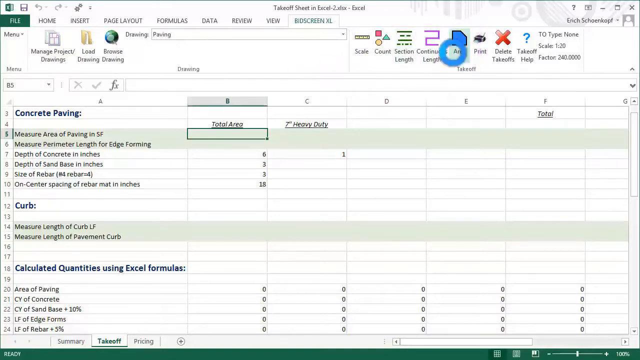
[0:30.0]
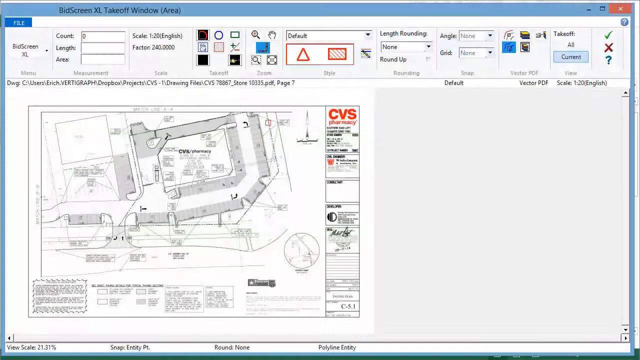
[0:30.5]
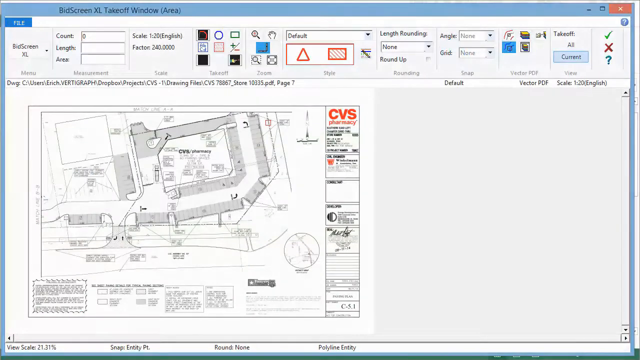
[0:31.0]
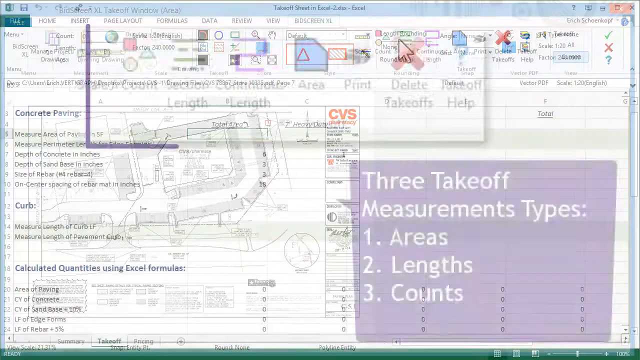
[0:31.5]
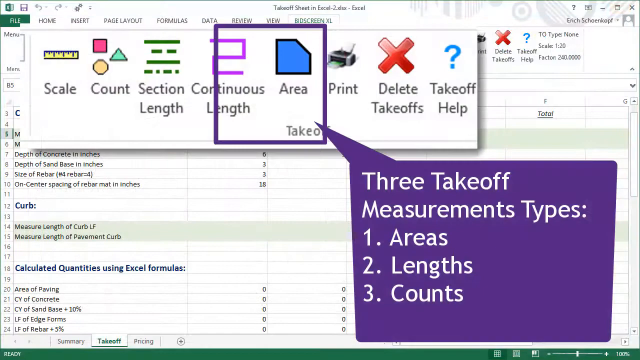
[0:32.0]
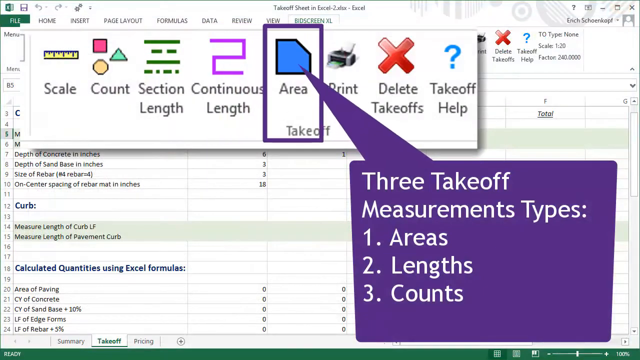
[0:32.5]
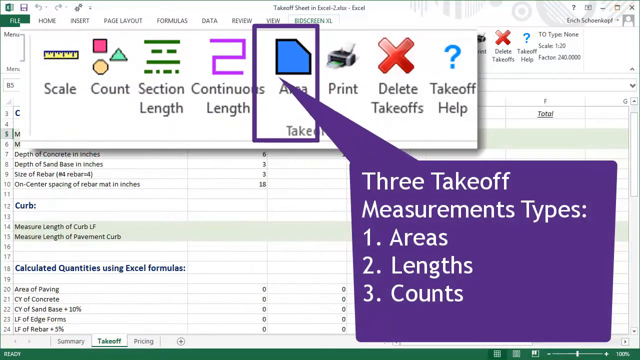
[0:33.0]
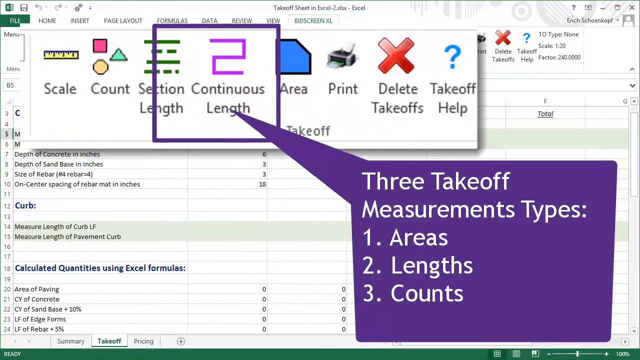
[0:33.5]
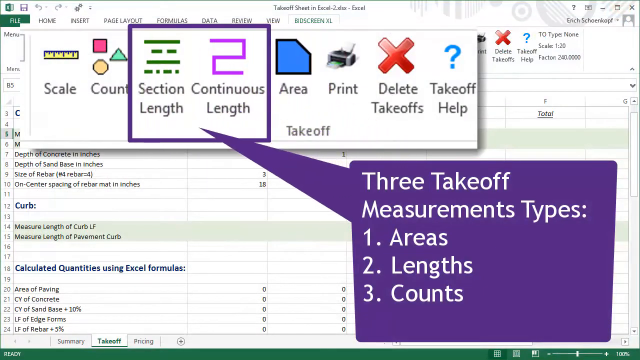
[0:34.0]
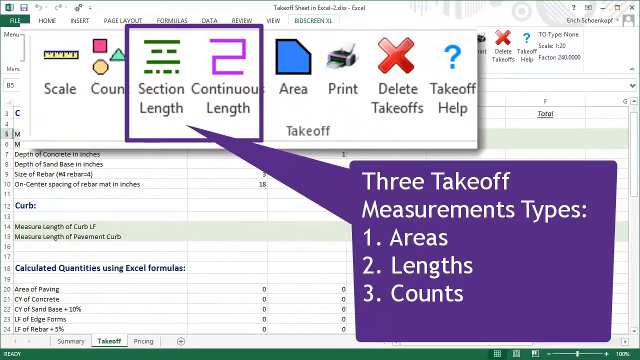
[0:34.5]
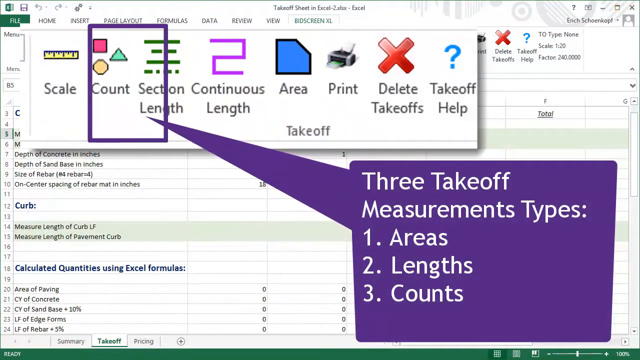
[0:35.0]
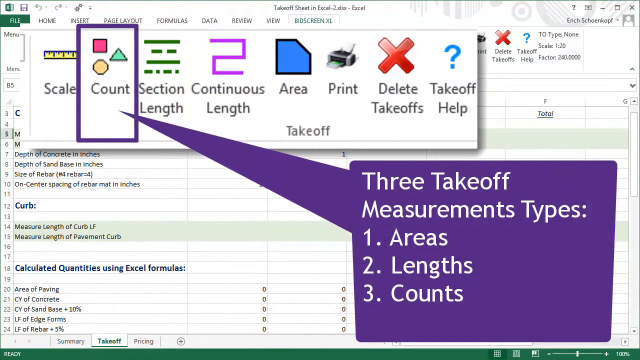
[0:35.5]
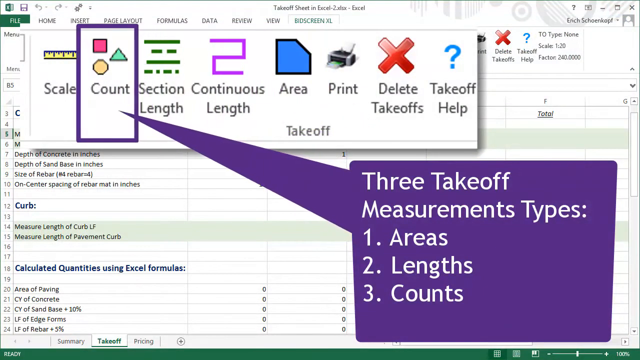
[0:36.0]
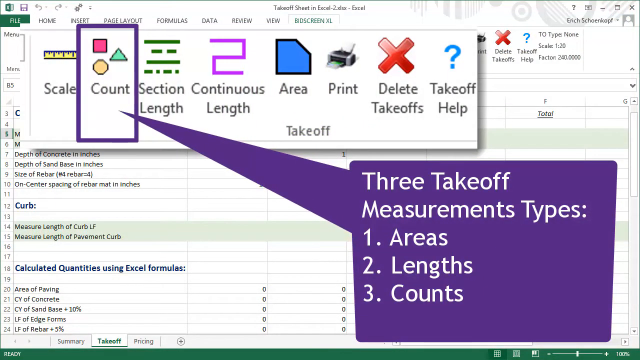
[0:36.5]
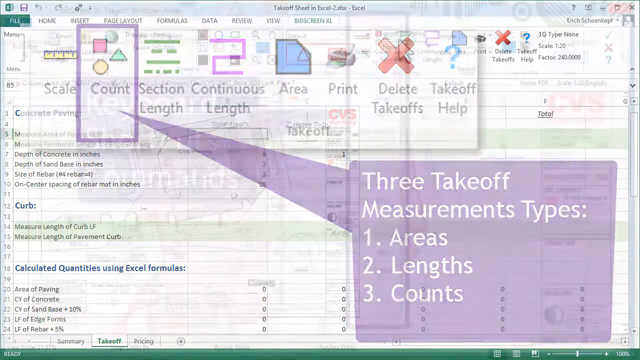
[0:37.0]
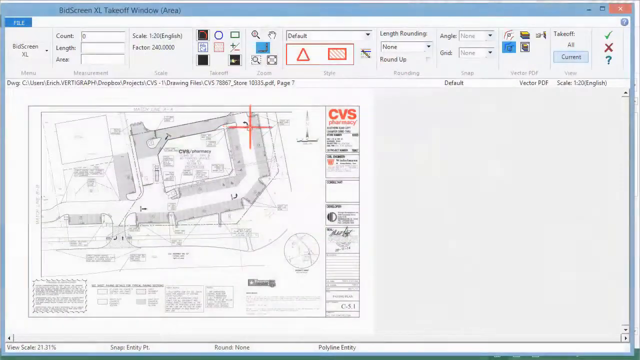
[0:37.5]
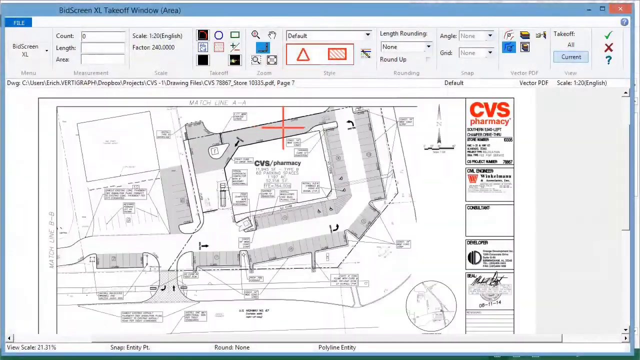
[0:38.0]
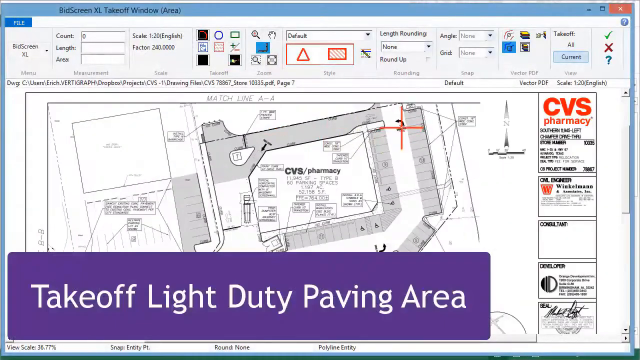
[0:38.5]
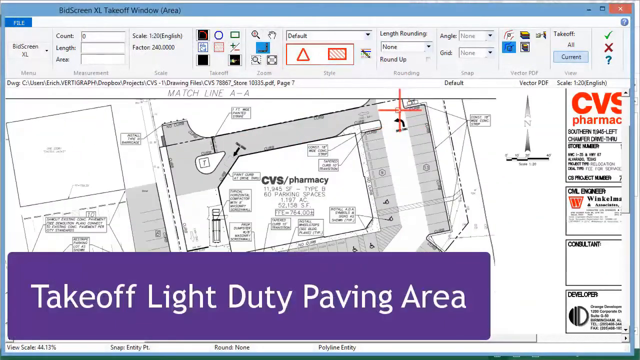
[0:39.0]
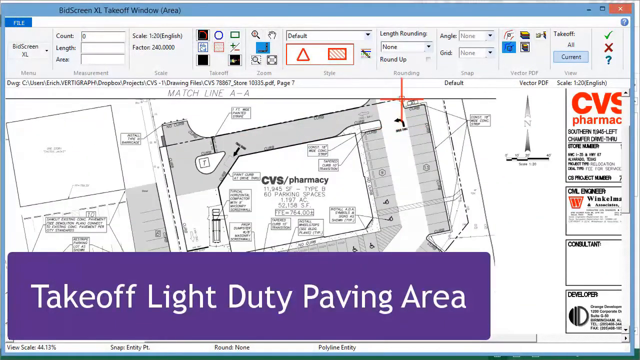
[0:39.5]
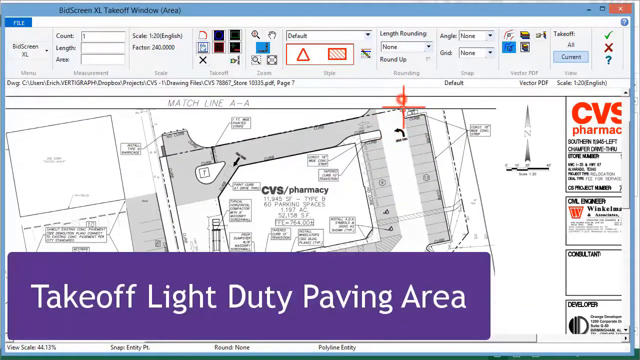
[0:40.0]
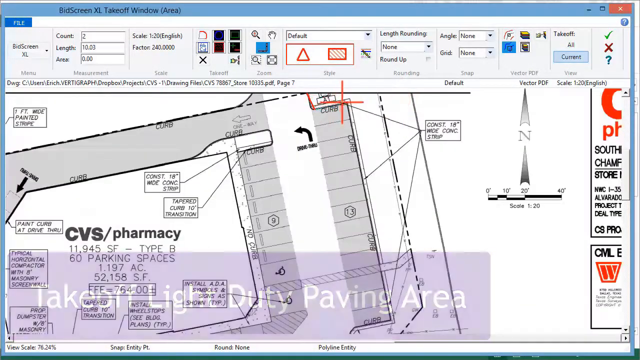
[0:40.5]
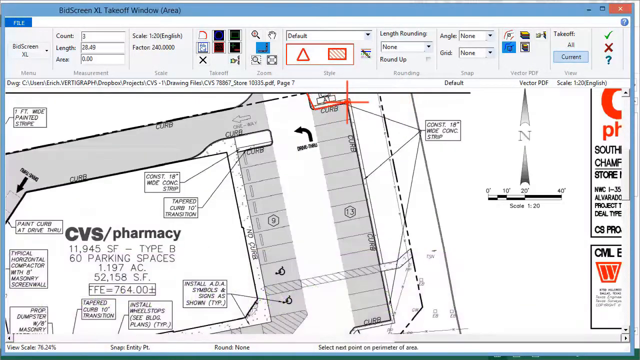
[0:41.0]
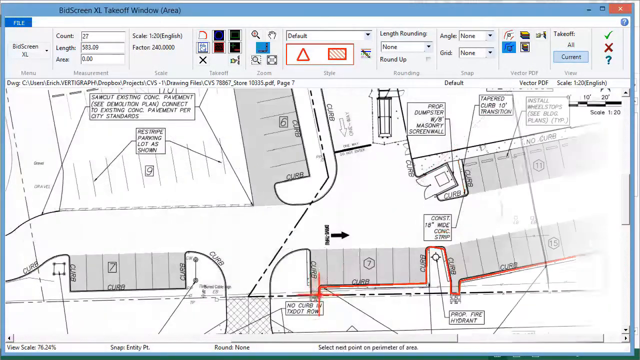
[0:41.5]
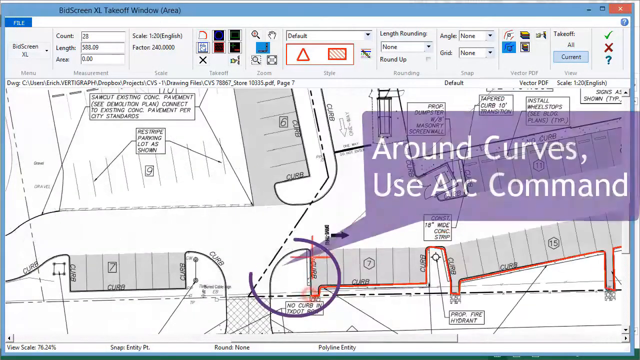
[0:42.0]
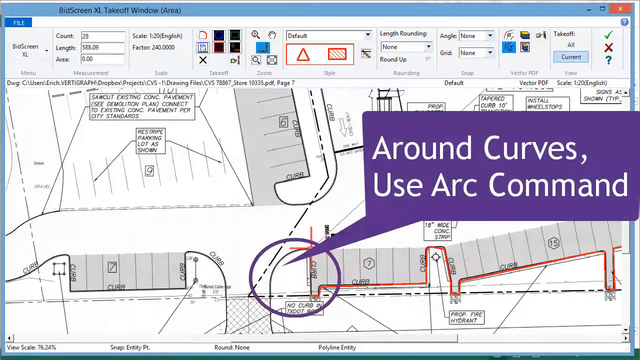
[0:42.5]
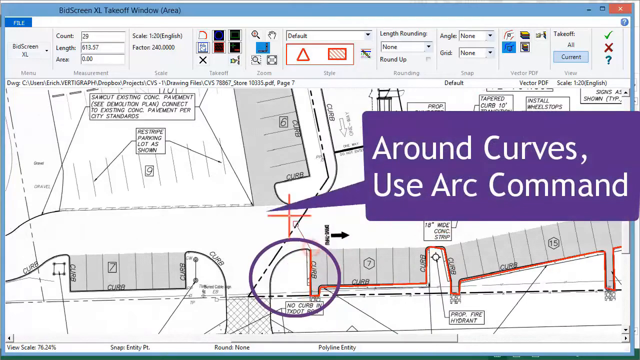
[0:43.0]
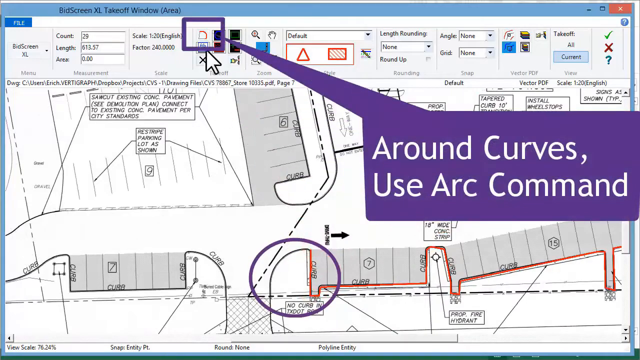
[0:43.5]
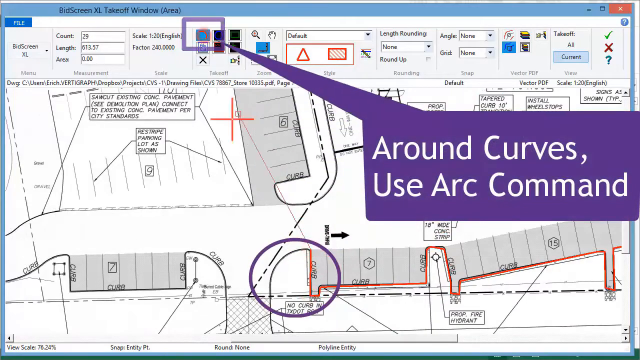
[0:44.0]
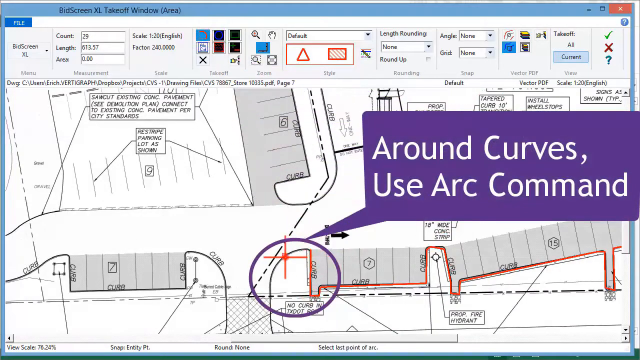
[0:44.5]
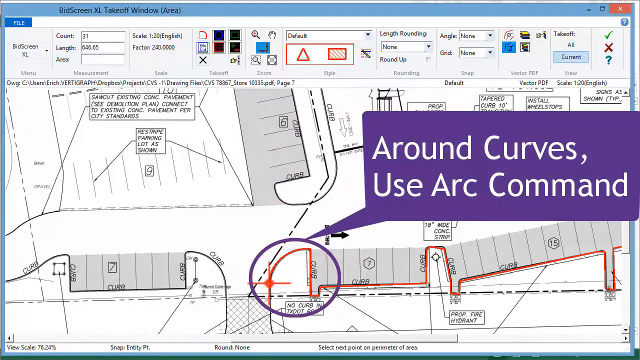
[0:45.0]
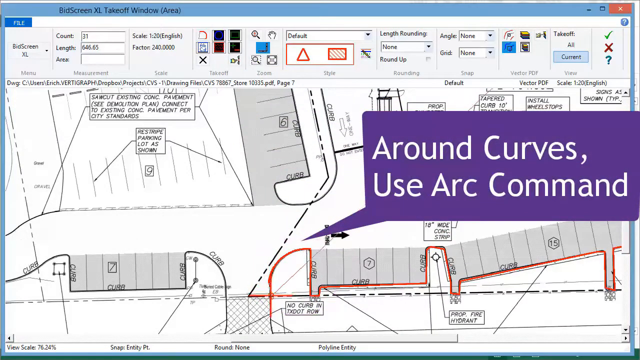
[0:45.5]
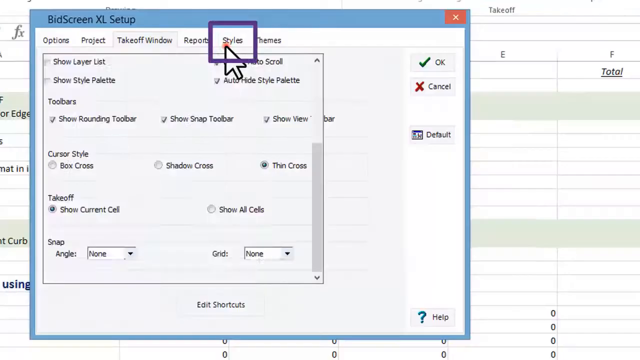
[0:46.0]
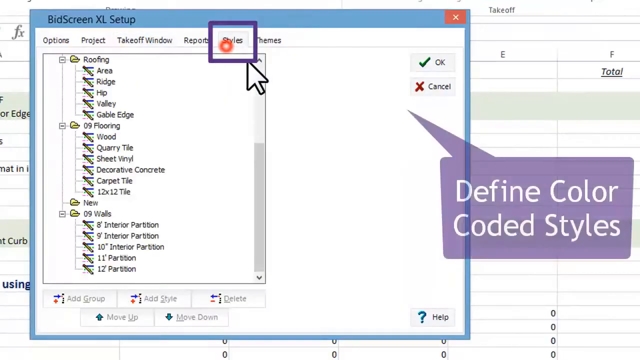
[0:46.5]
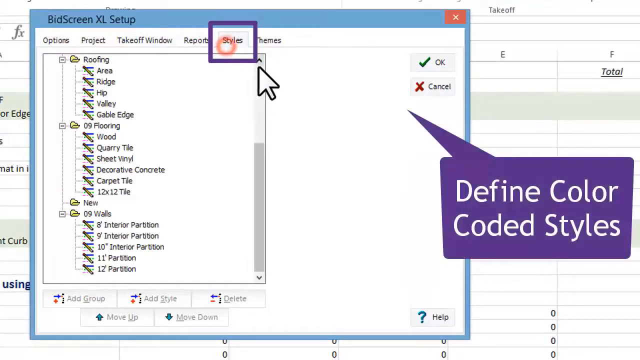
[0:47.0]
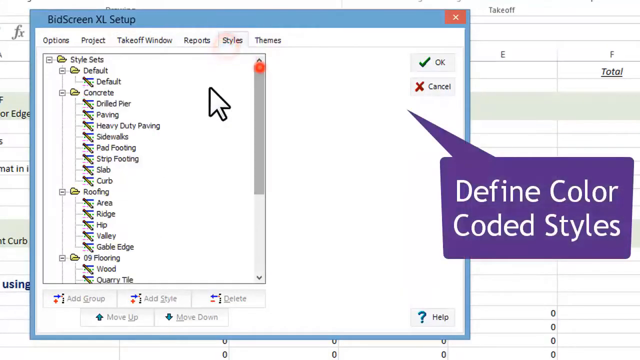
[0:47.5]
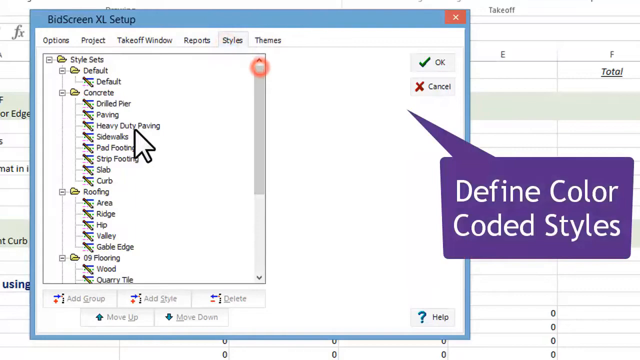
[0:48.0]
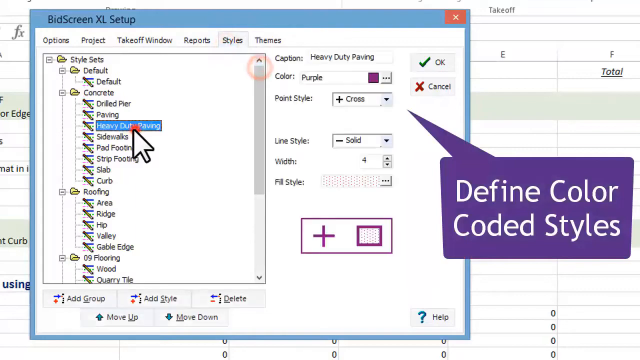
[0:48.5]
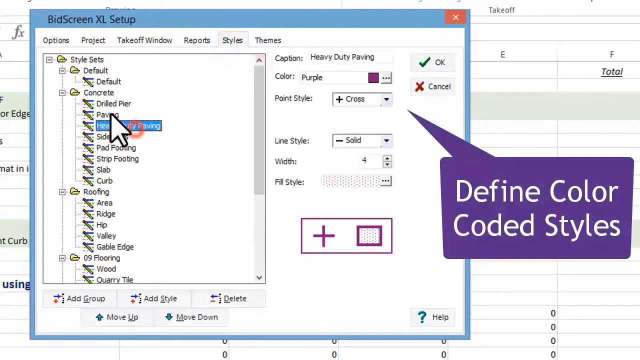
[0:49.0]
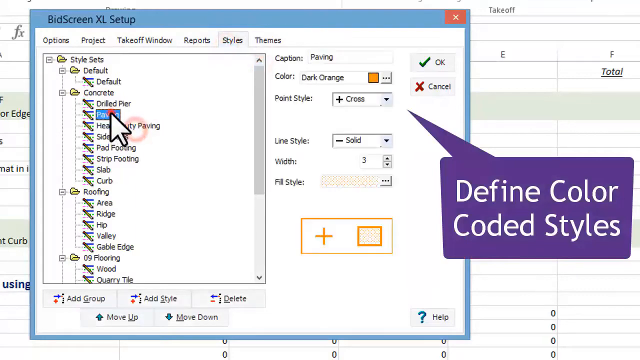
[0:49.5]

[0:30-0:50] The Excel sheet, used for construction and drawing on the construction site, shows a column and an area. In this area there is a pull-out box listing three takeoff measurement types: area, length and count. Around a curve, the arc command is used. Sizes with defined, color-coded styles are shown, and there is another pull-out box. The worksheet is for tracking and documentation in a construction company or on a construction site, and it shows entries for concrete and length measurement parameters, along with a lot of other information.